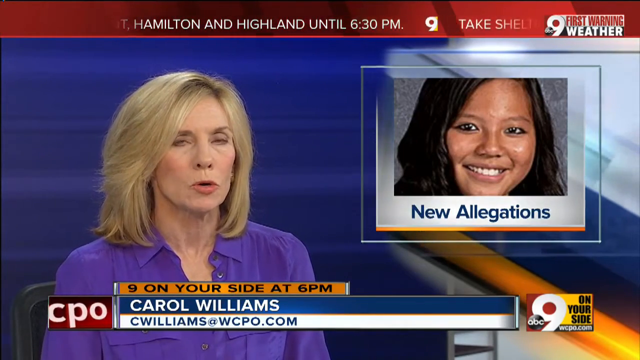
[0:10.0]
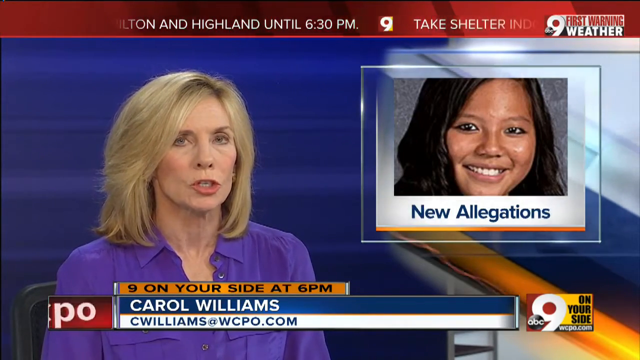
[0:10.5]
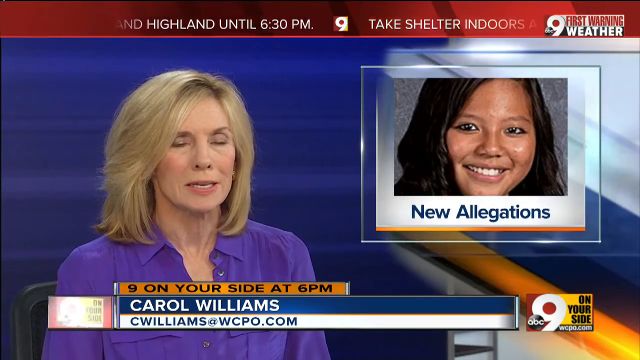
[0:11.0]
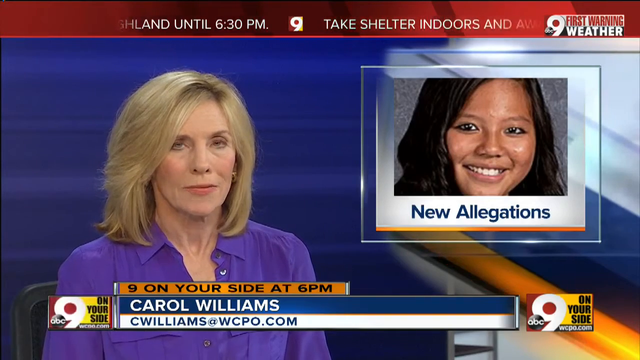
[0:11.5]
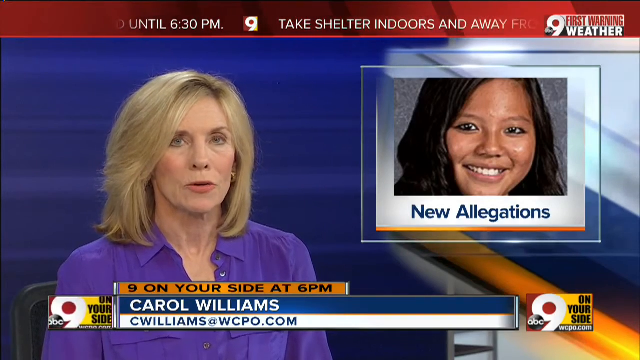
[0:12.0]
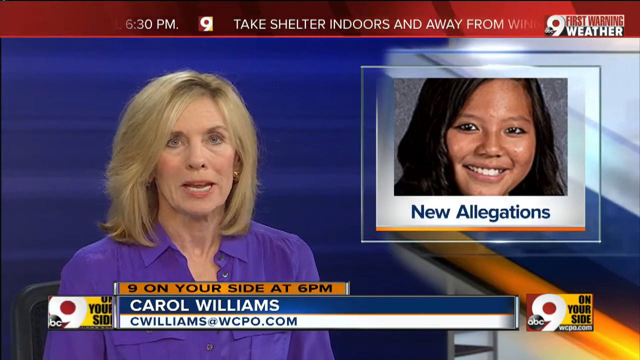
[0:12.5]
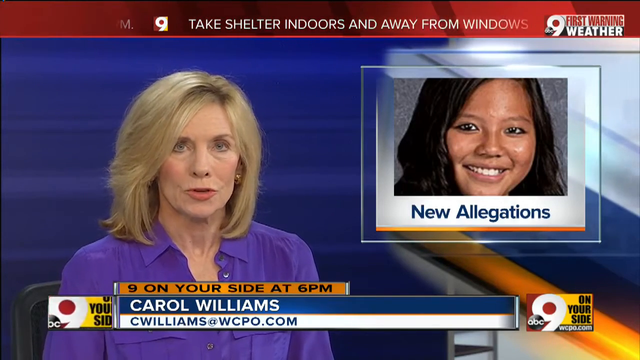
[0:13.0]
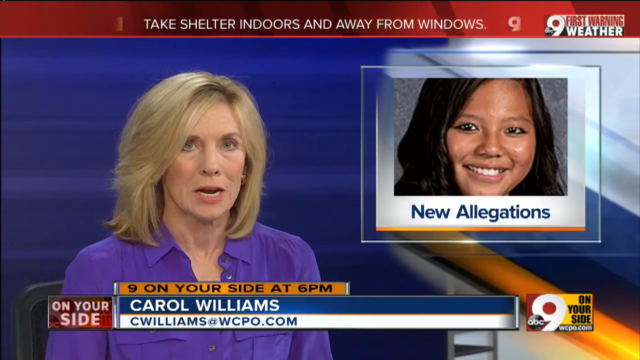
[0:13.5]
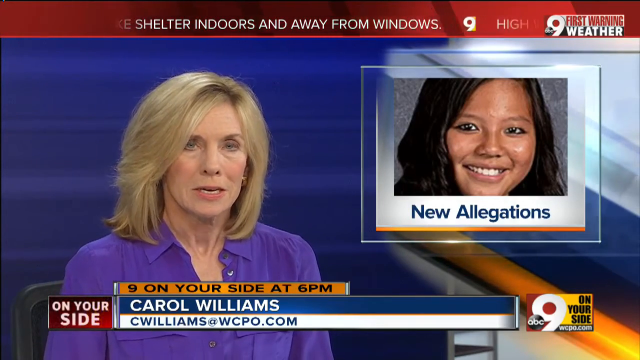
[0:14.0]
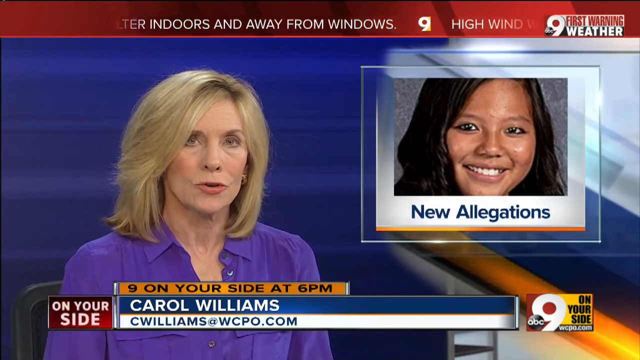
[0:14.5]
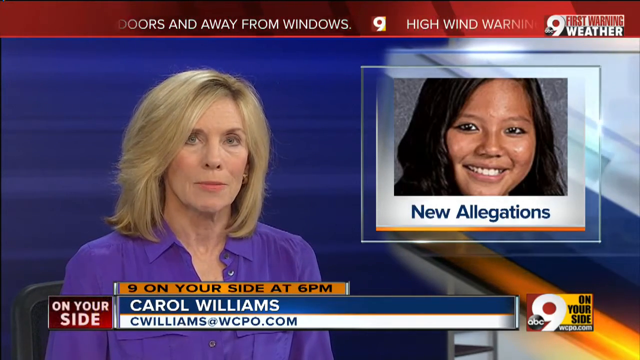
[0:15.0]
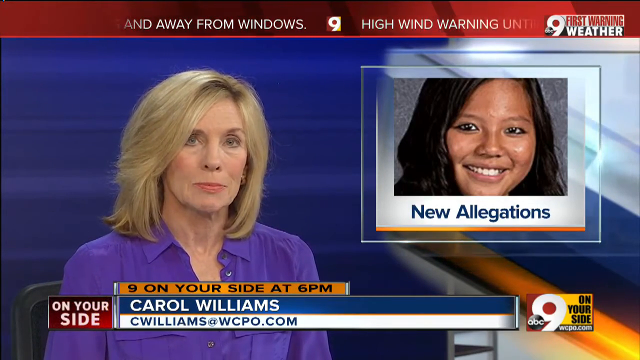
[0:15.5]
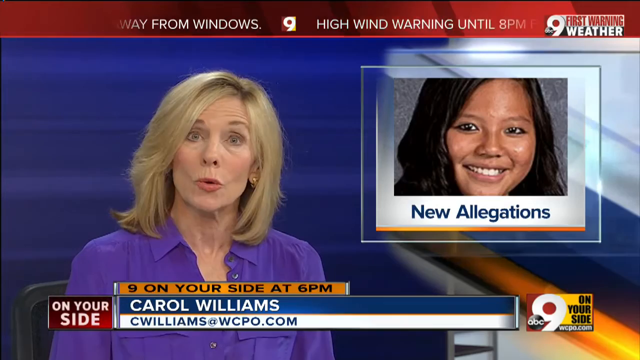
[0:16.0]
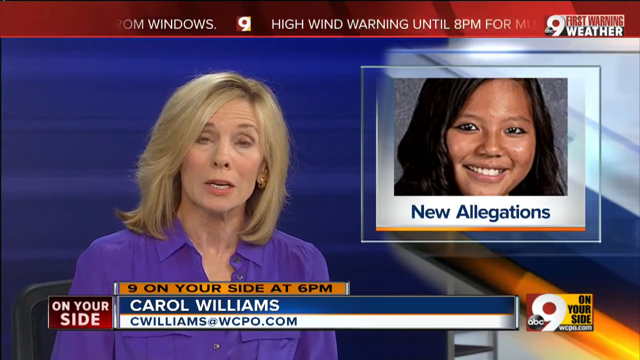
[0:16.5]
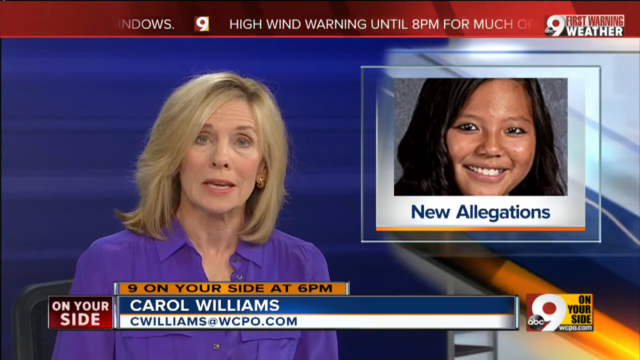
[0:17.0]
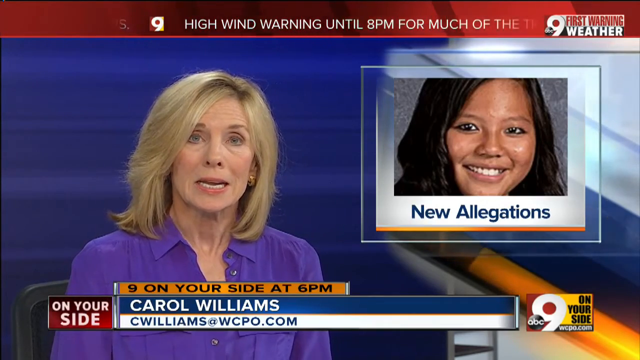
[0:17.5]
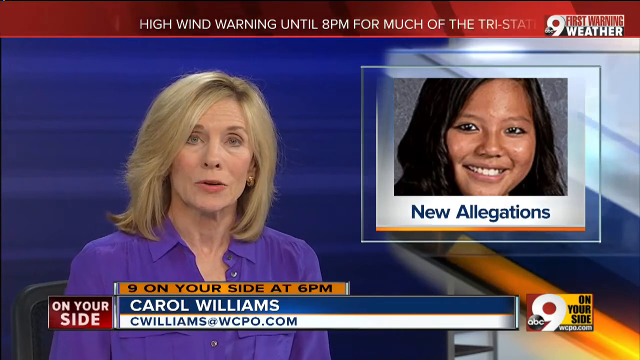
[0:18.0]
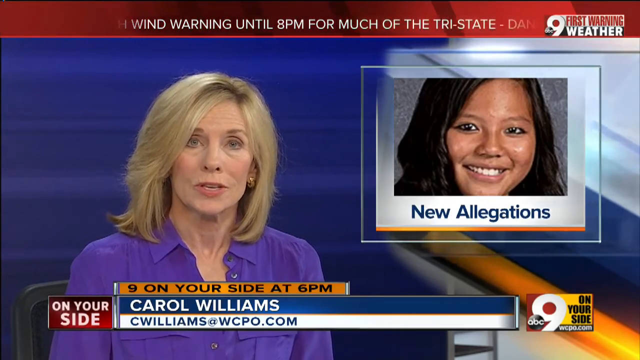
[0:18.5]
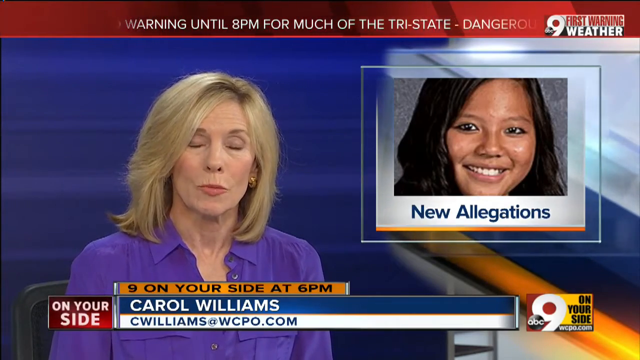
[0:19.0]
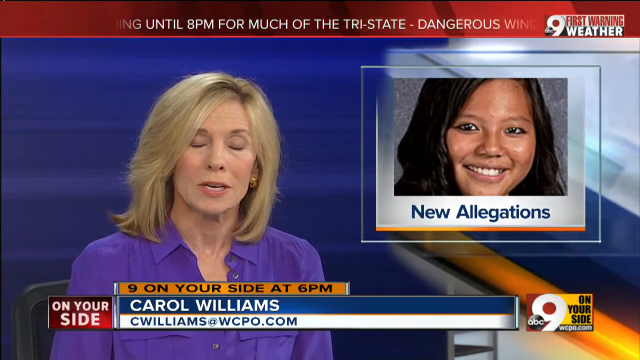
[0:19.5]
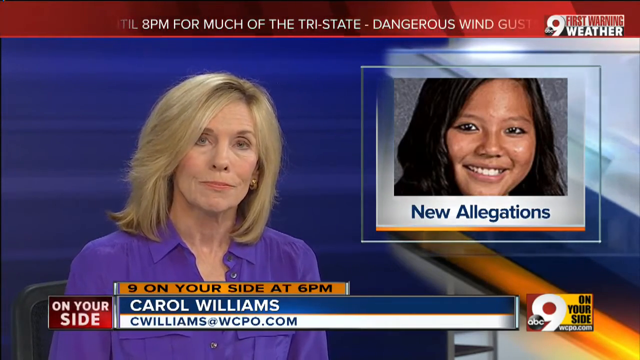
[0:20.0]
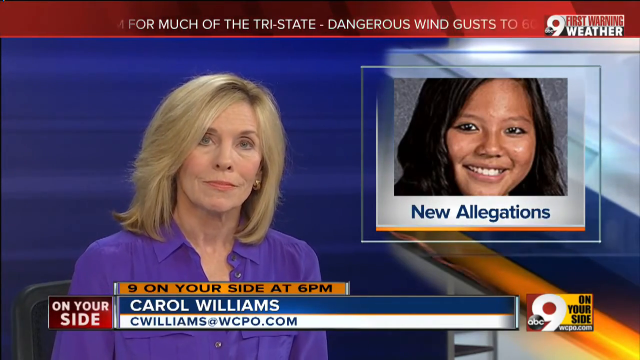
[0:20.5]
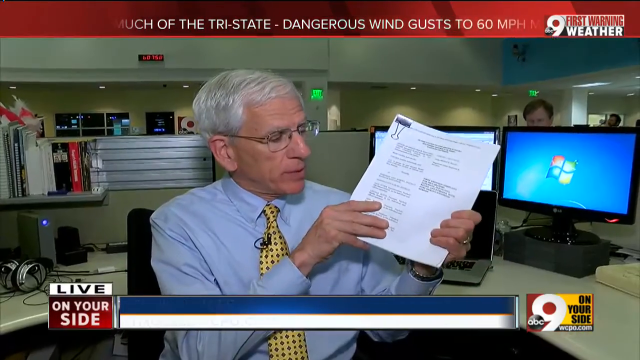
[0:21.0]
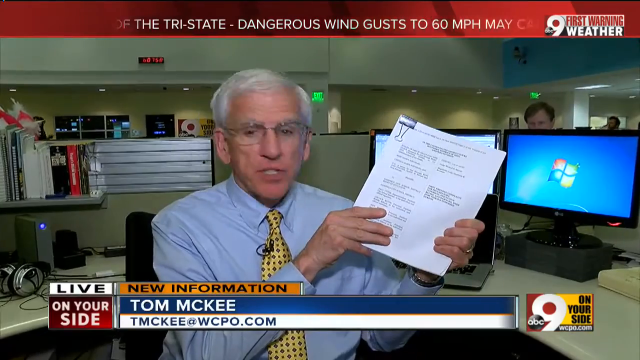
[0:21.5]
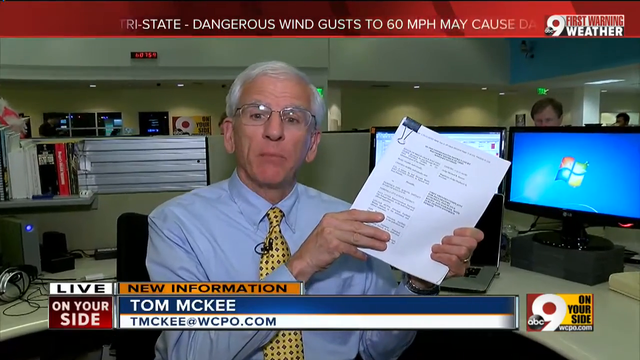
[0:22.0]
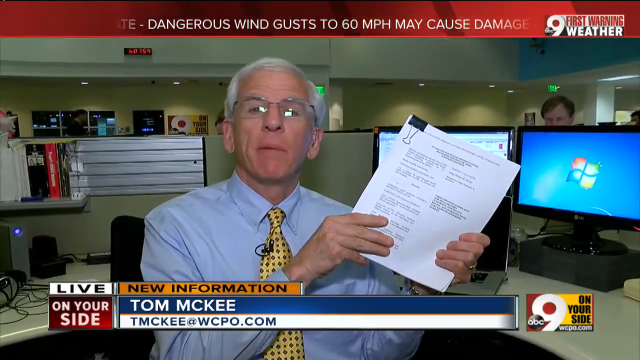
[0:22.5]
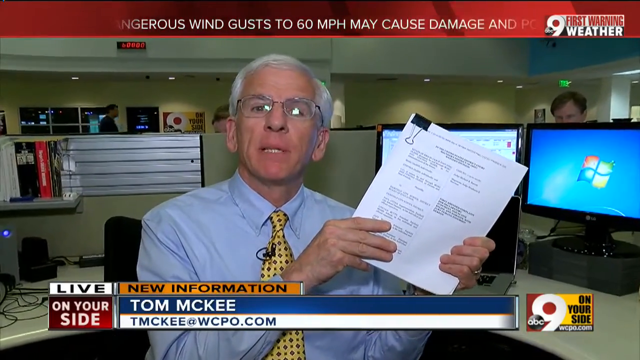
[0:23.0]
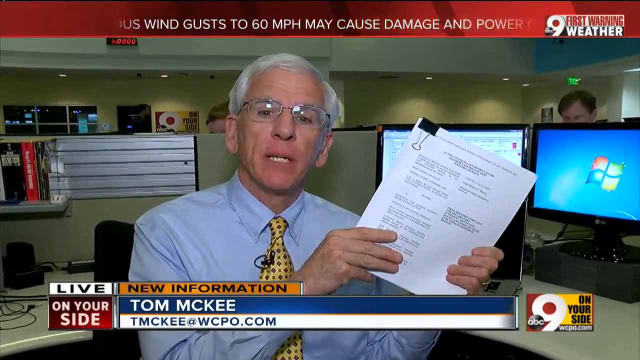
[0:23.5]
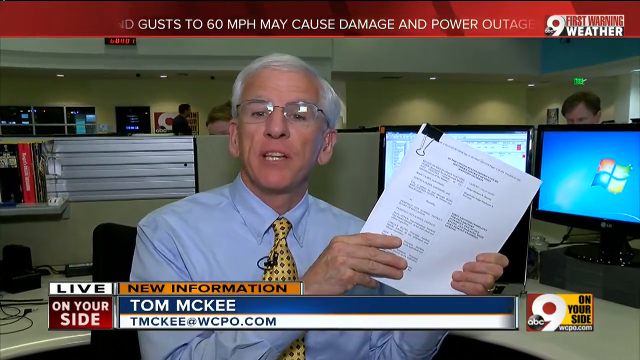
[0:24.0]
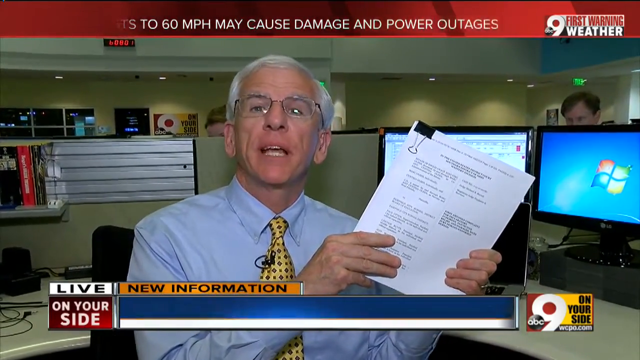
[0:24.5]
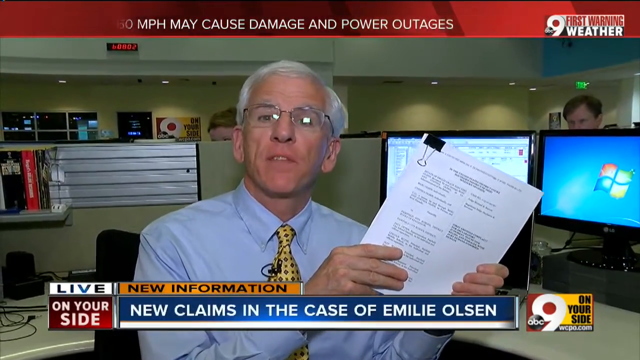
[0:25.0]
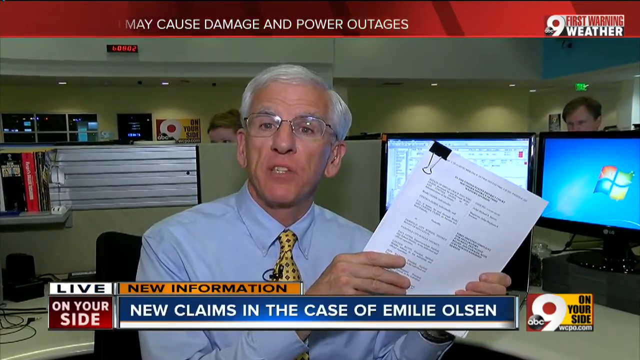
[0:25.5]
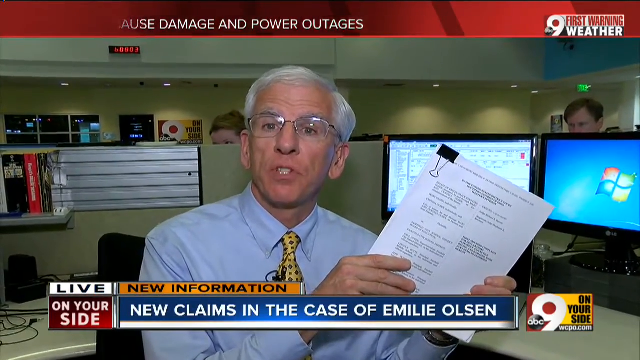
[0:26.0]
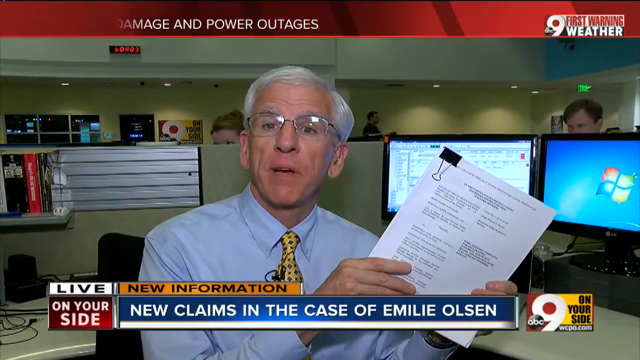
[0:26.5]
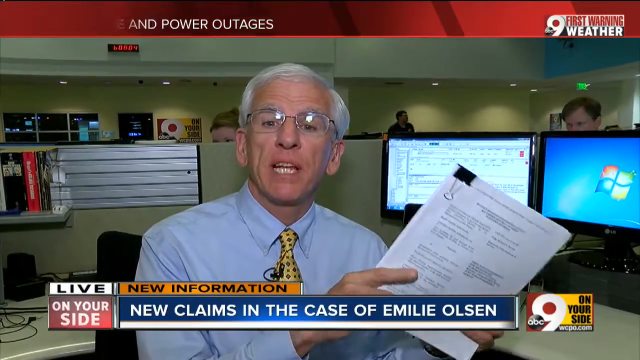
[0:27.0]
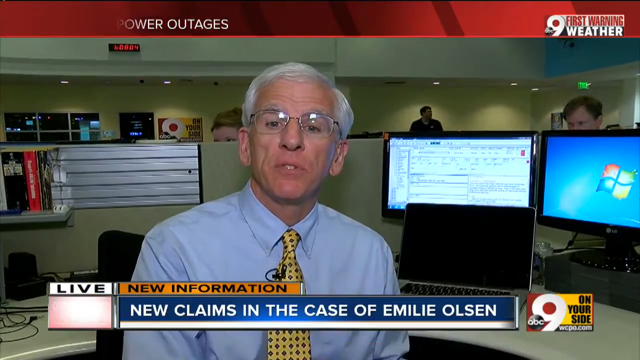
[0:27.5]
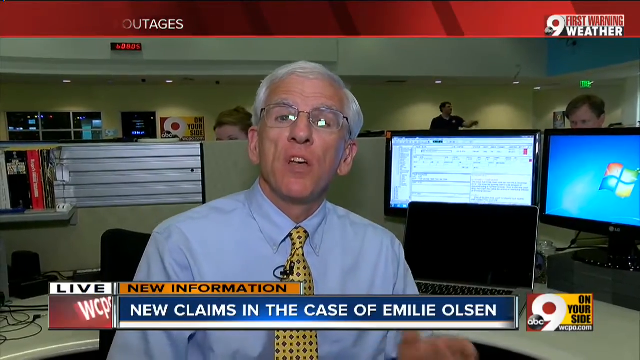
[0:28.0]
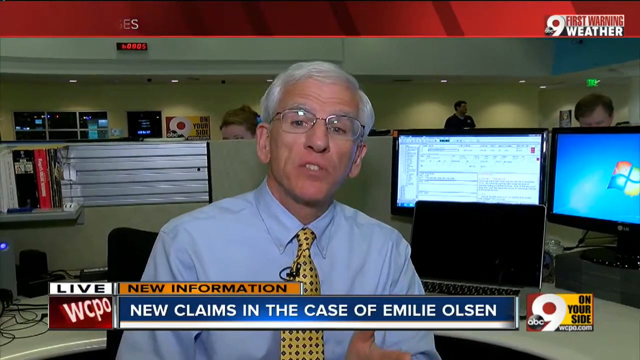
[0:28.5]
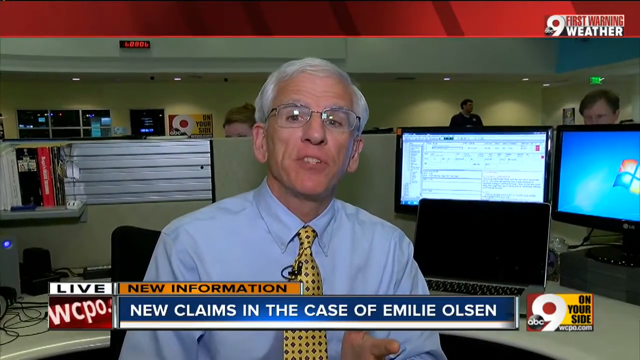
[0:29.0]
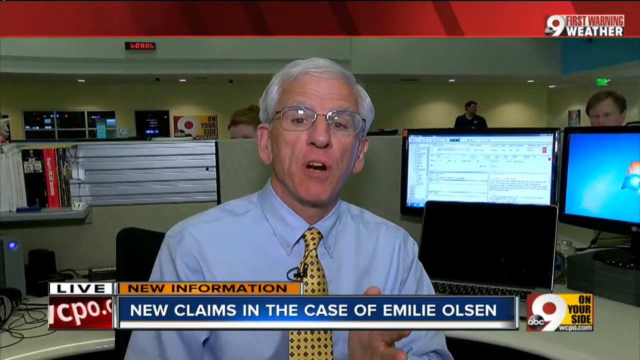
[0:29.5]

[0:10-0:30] The older woman, probably around age 40, with blonde hair, a purple shirt and kind of wrinkly skin, continues to appear with the new allegation screen, and text reads "Carol Williams on your side, on your side, 9". The video then transitions to an older man, probably around age 60, with gray hair and glasses, wearing a blue shirt and a kind of goldish black tie. He picks up some papers. No other people besides these three appear.